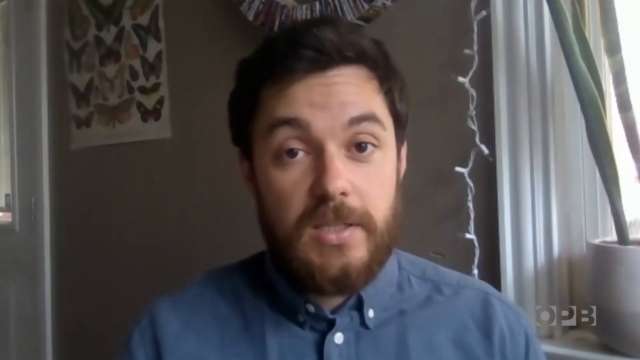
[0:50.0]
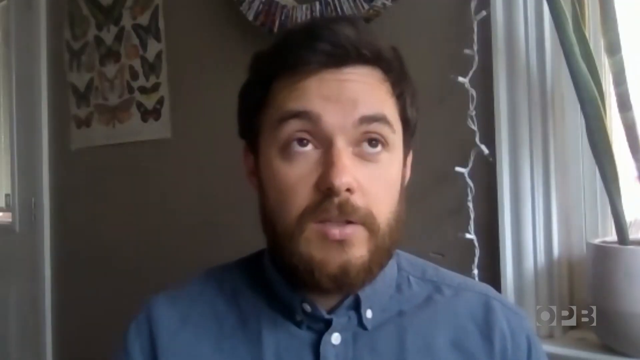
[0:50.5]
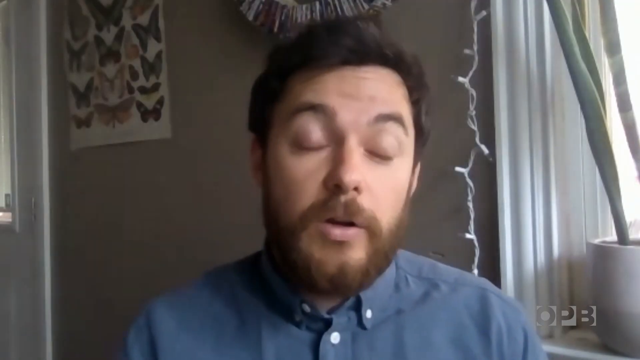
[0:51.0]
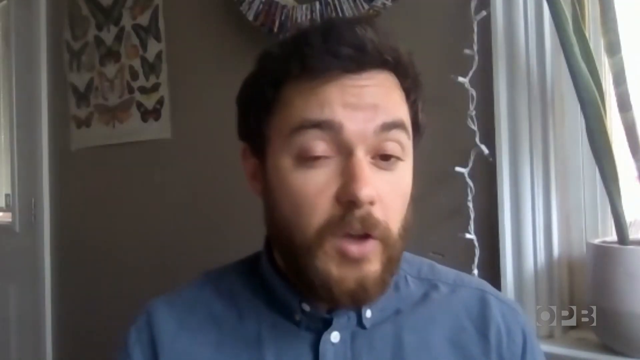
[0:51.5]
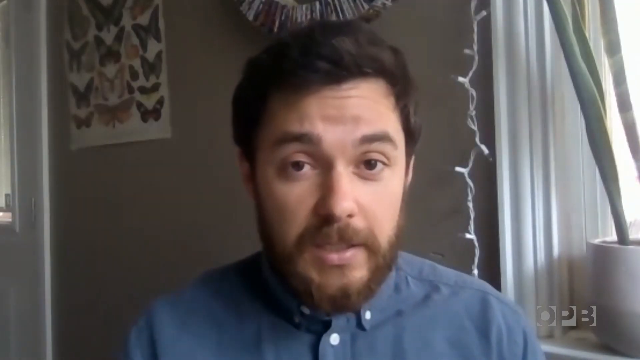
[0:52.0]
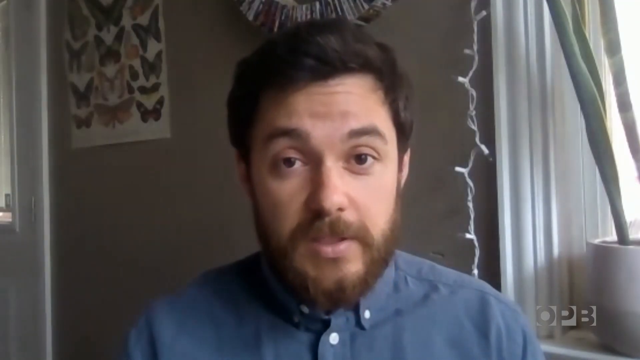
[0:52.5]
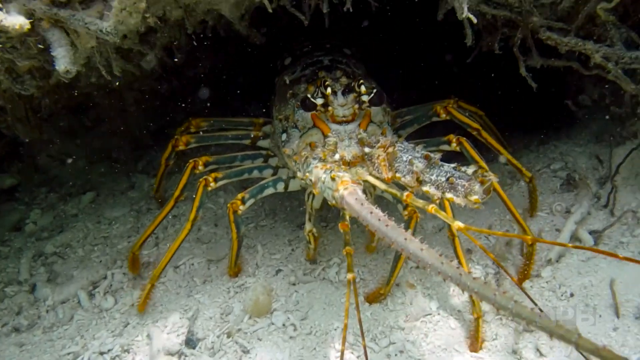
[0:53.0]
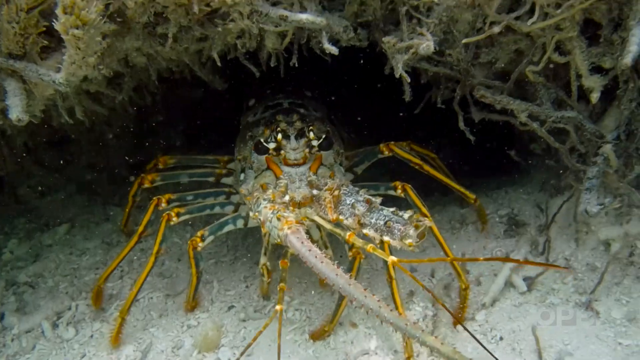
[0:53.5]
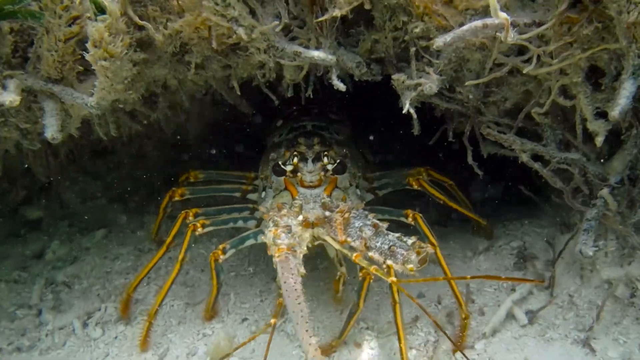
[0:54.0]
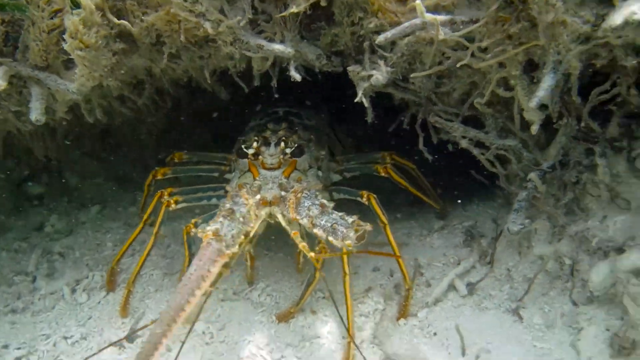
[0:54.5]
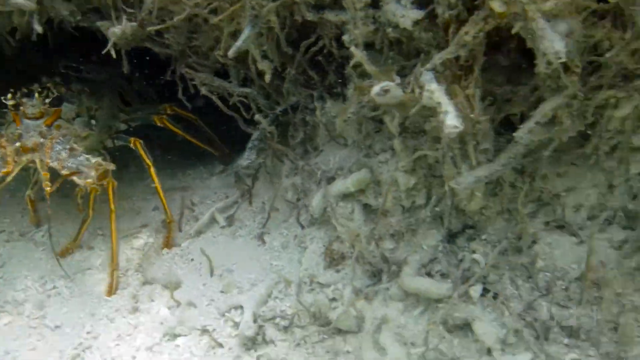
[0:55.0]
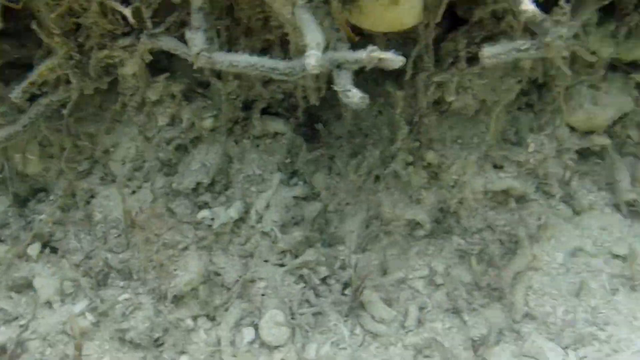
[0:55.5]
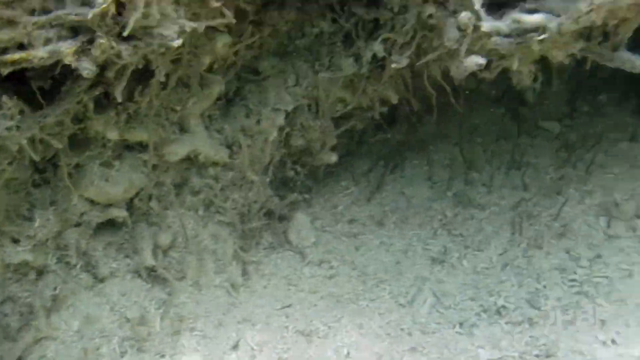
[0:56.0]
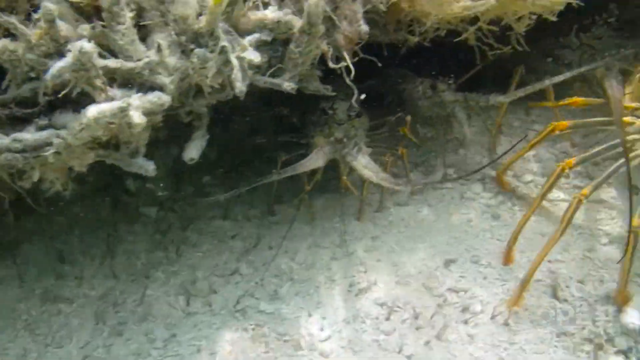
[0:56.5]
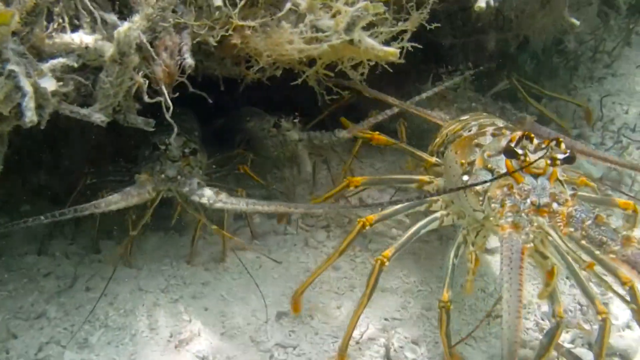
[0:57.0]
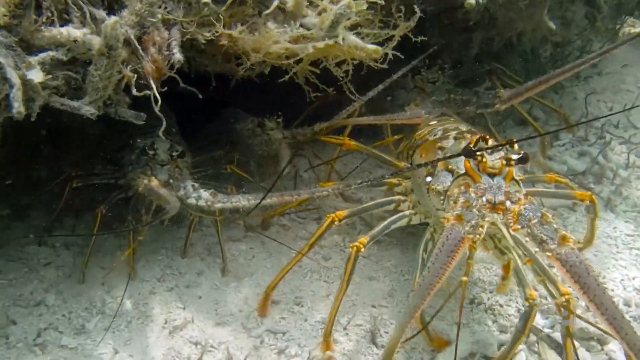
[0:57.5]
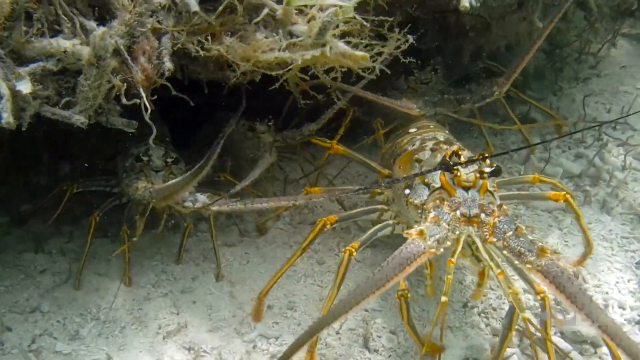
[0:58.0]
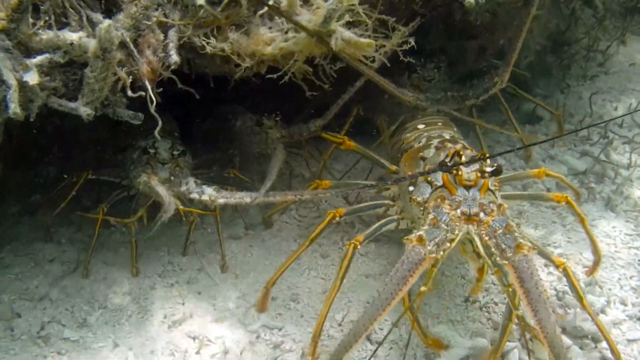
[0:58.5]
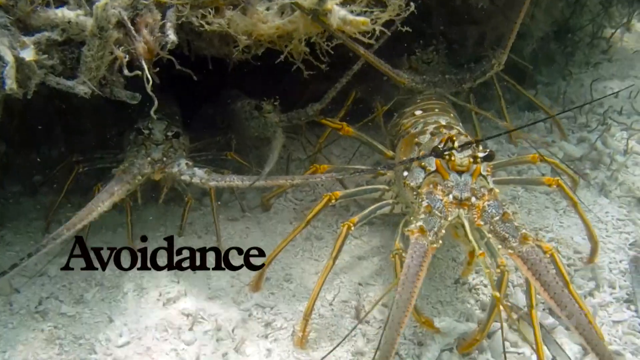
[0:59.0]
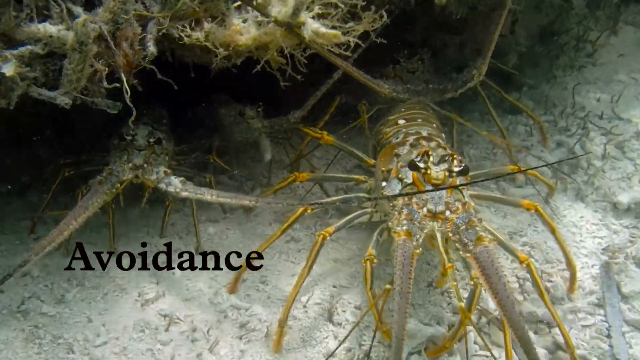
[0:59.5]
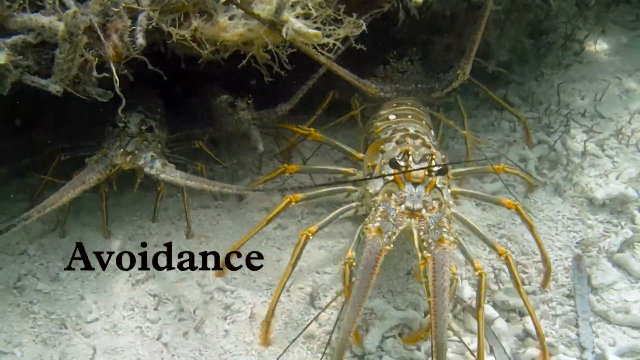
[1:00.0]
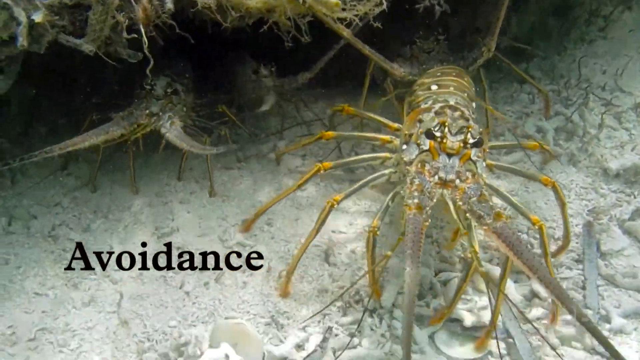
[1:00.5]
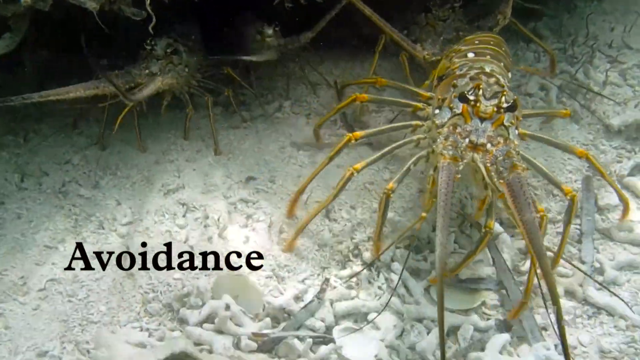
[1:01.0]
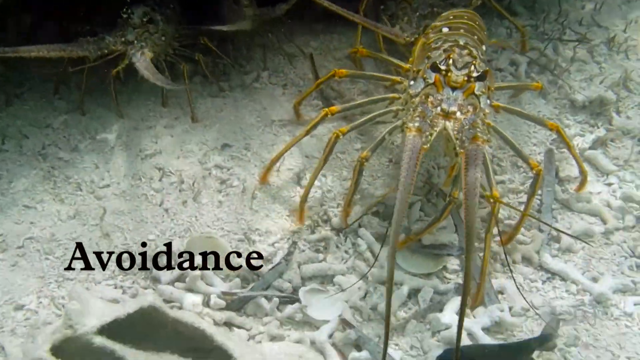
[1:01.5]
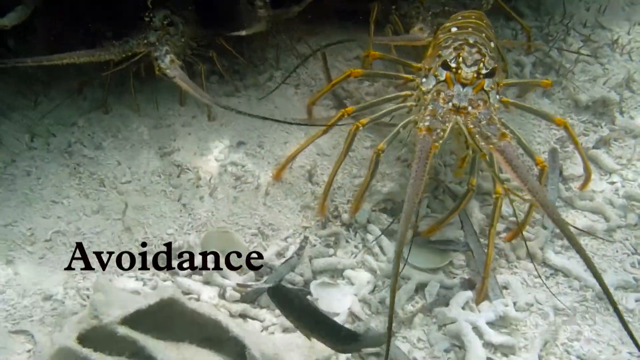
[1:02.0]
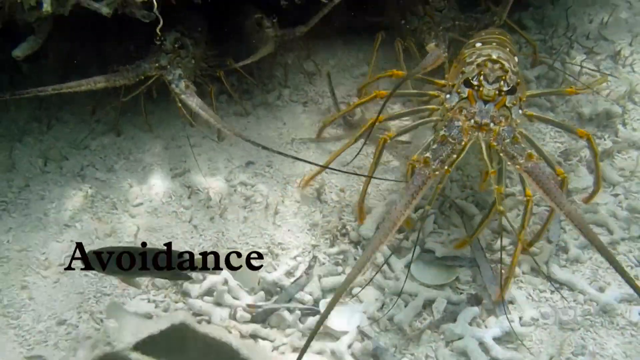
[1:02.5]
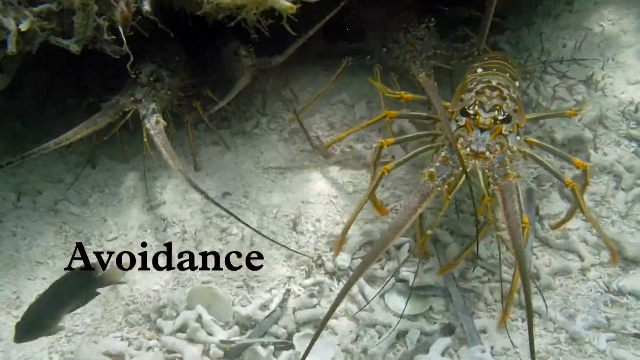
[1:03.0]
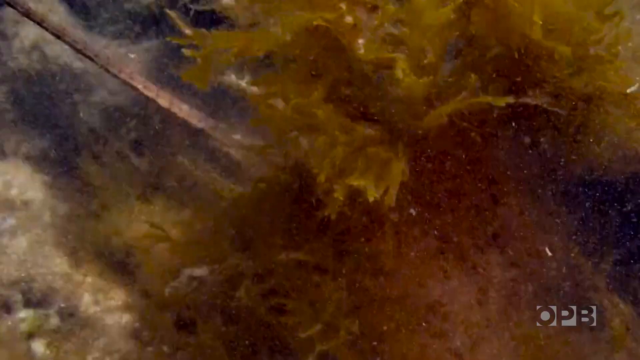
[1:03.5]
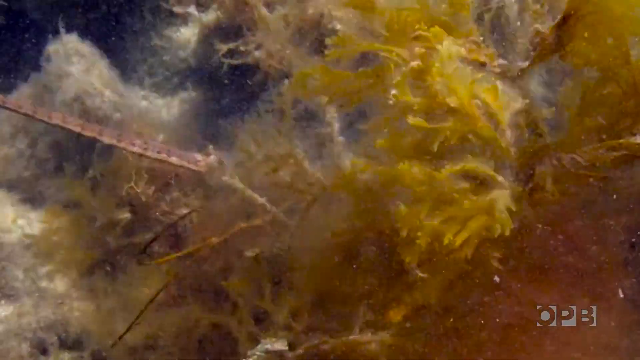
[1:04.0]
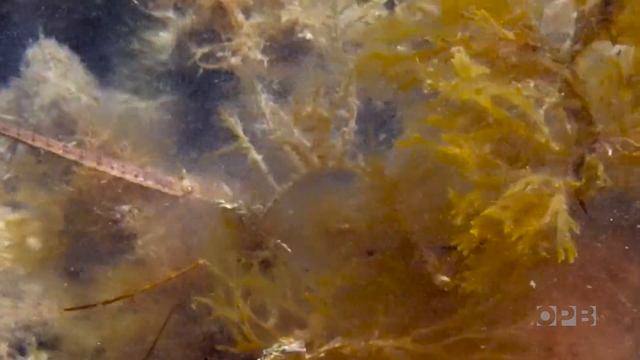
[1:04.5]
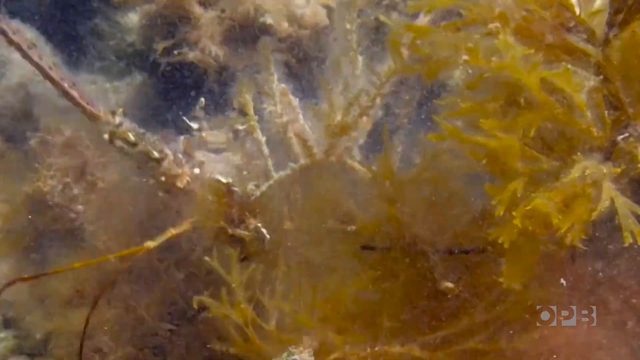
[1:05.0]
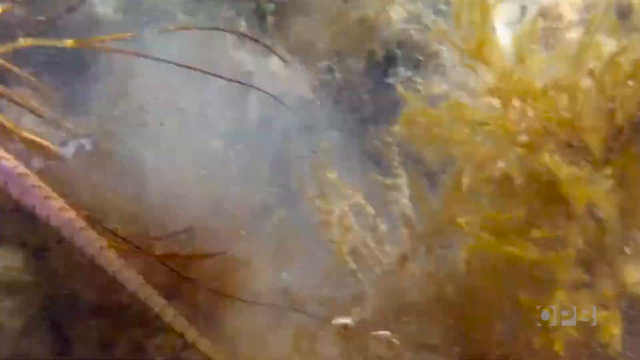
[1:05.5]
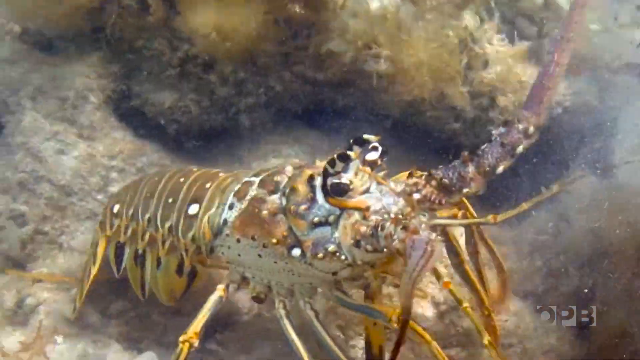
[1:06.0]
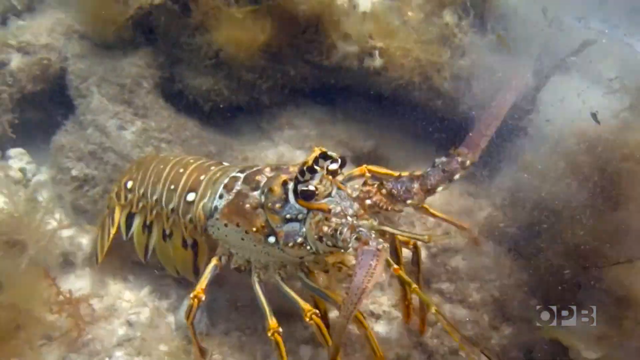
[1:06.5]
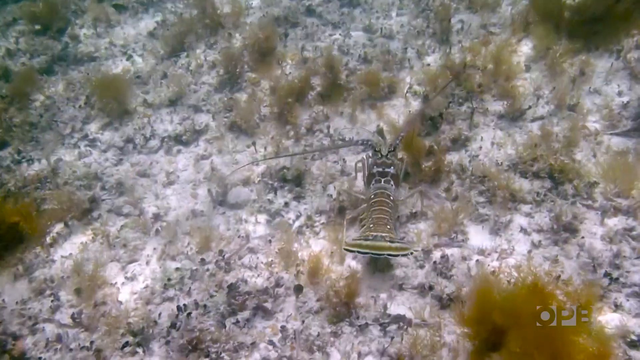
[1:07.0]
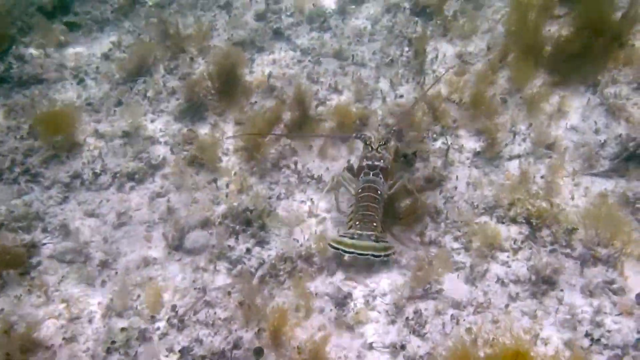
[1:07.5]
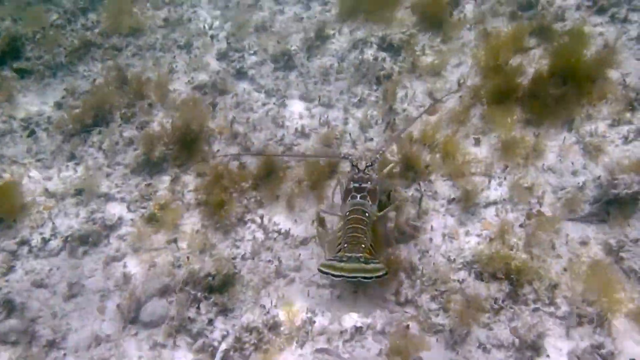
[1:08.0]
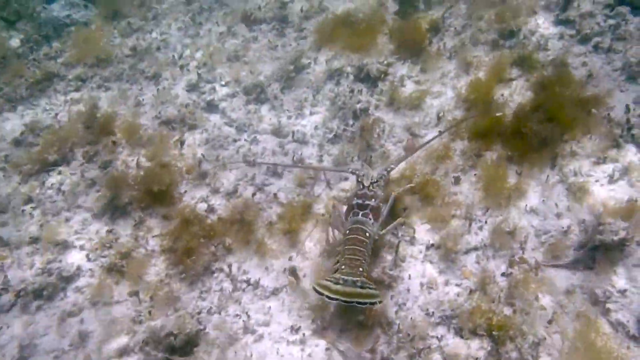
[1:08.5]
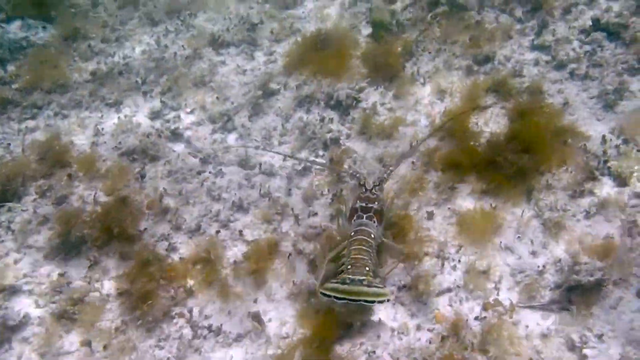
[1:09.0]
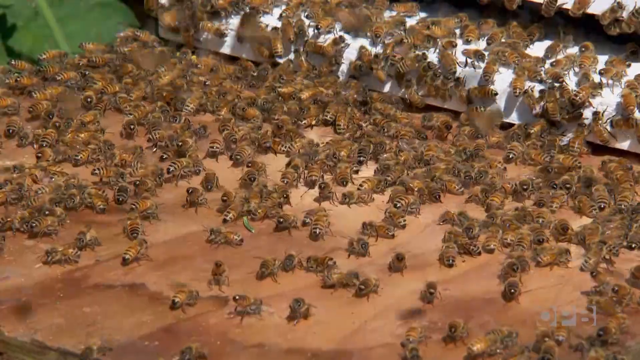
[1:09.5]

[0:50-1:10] The man is still talking to someone, probably via Zoom. A lobster is shown in the ocean, then another lobster, and the words "avoidance" appear in black letters as little fish swim by. The lobster looks like it might have eaten something, and then it walks on the ground. The creatures are believed to be lobsters or crabs, probably lobsters; they are not red and have grumpy faces. A bunch of bees, which appear to be honeybees, is shown. The man has a butterfly poster on his wall and what looks like some type of string lights next to his window; the lights are white, not colored.